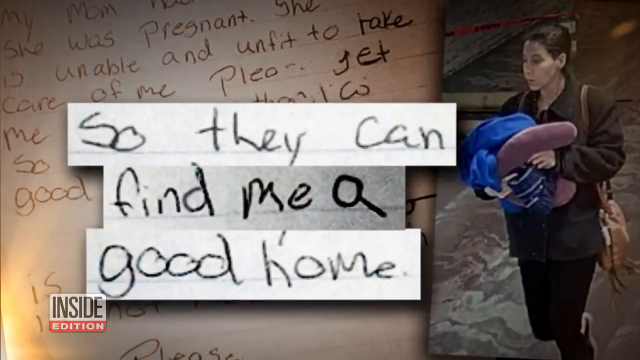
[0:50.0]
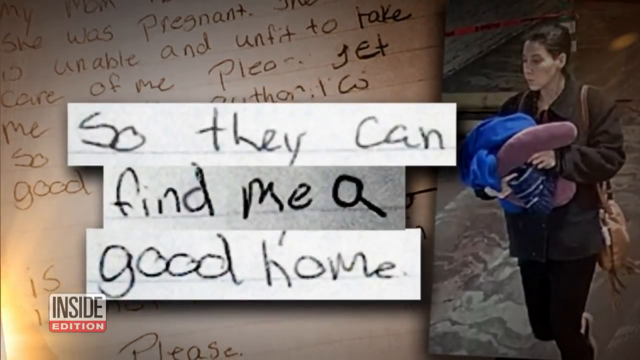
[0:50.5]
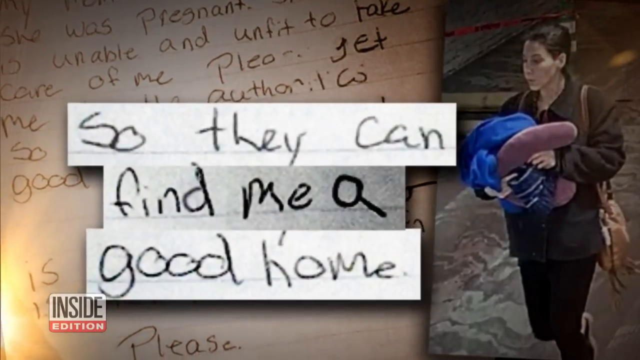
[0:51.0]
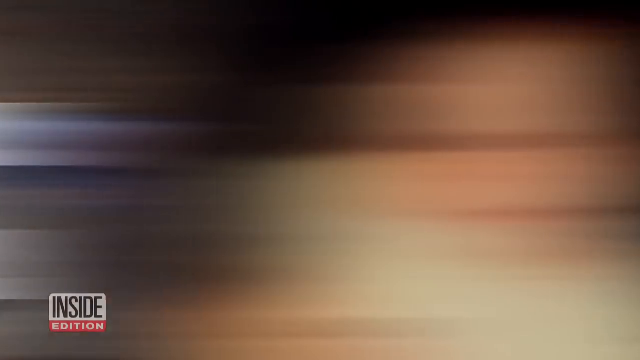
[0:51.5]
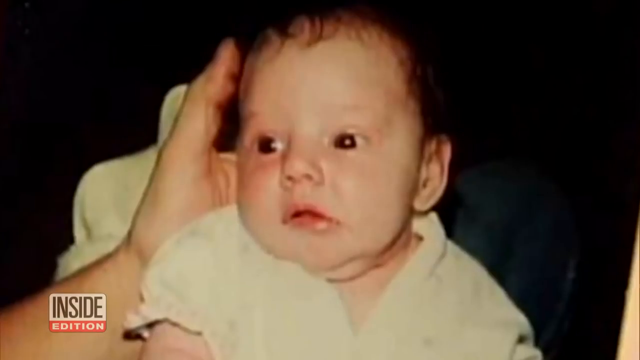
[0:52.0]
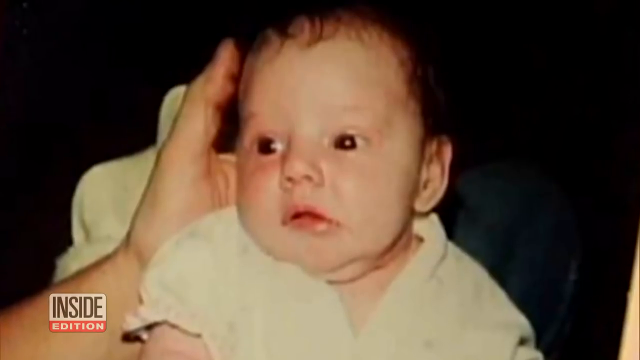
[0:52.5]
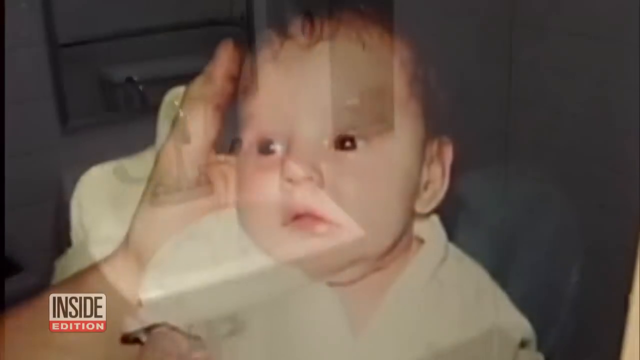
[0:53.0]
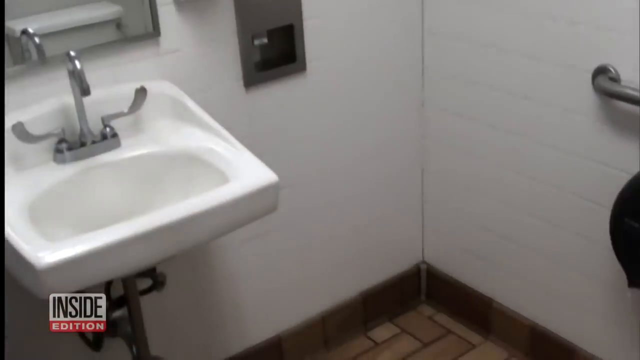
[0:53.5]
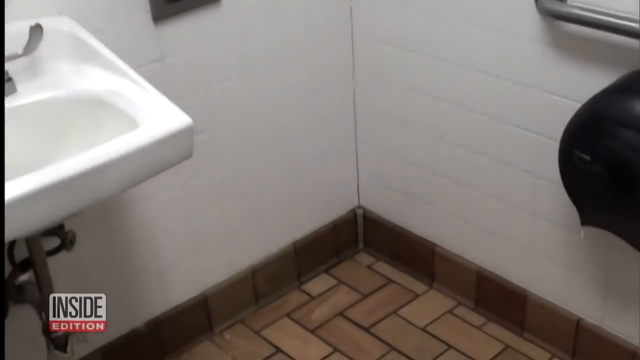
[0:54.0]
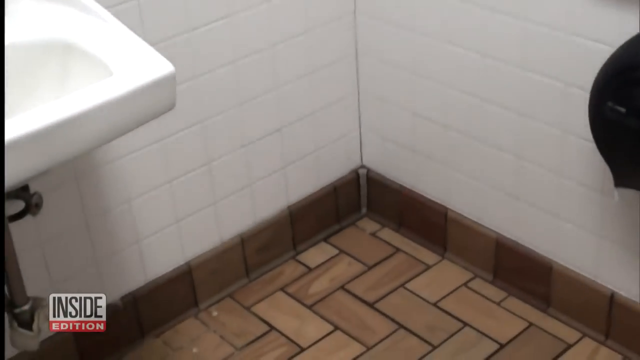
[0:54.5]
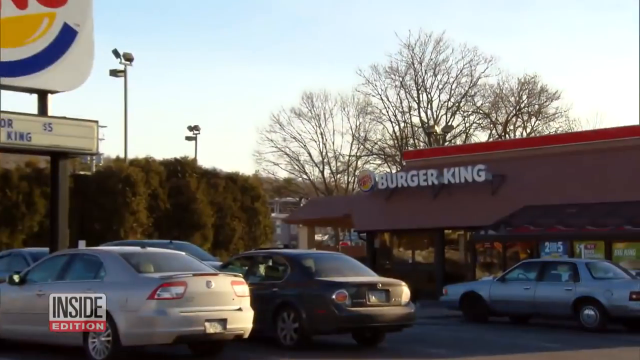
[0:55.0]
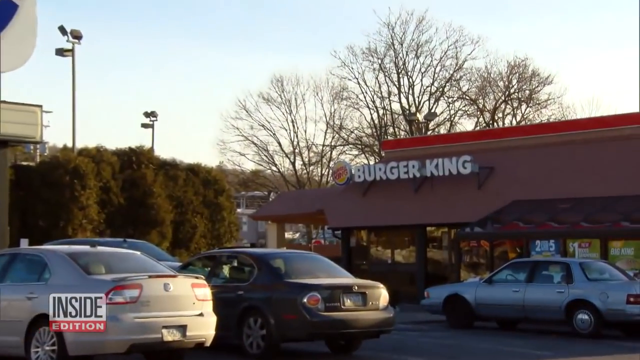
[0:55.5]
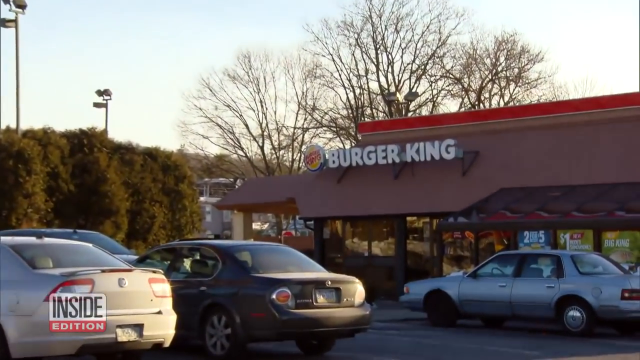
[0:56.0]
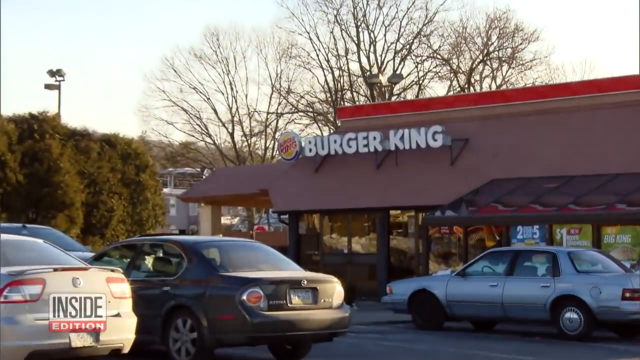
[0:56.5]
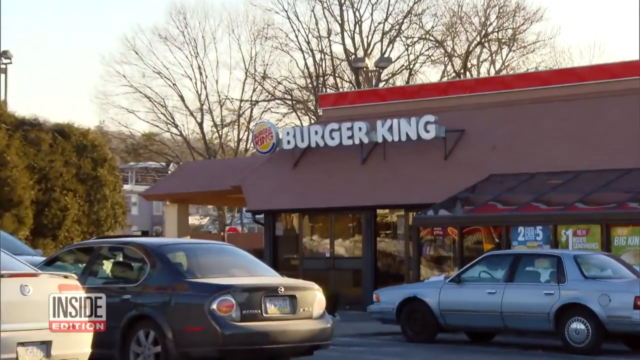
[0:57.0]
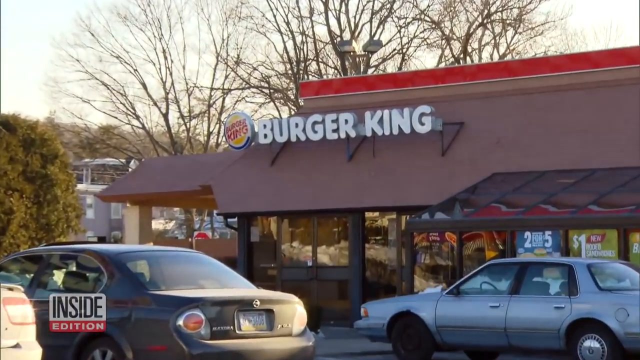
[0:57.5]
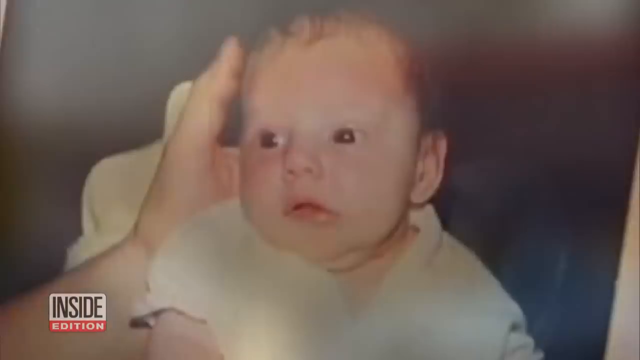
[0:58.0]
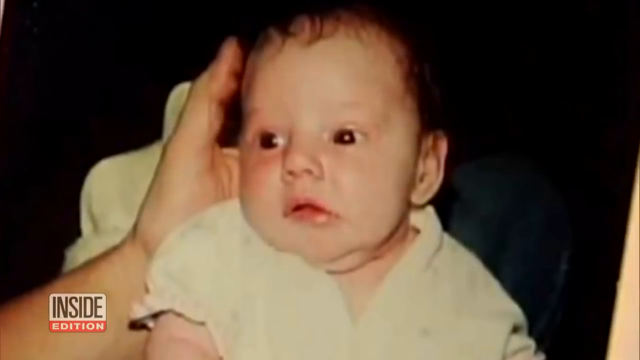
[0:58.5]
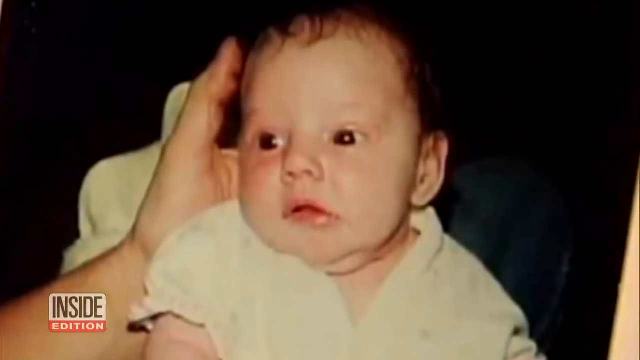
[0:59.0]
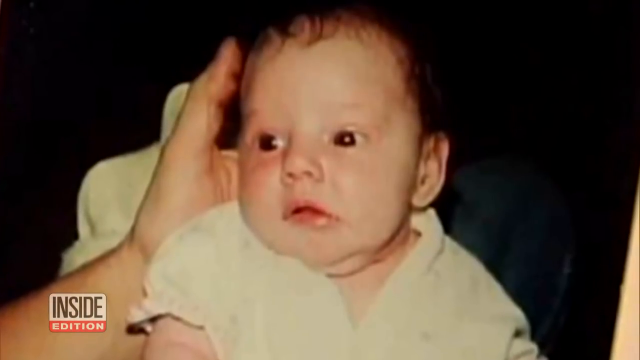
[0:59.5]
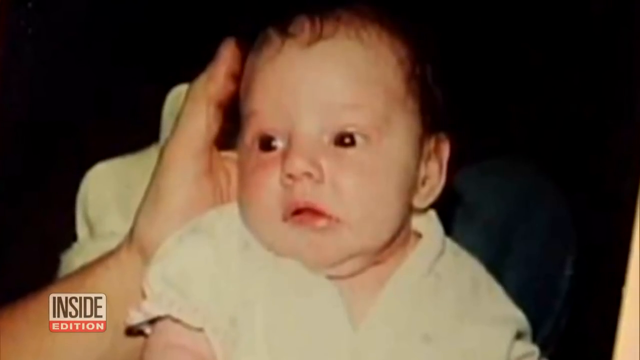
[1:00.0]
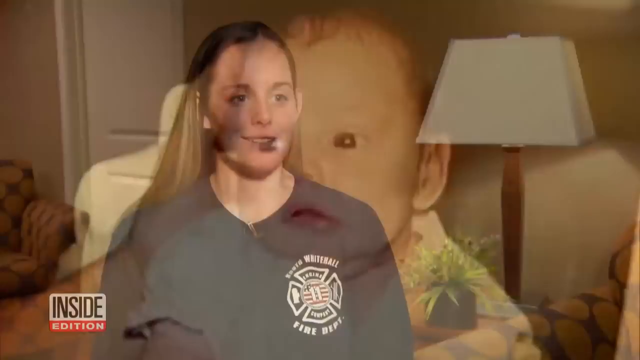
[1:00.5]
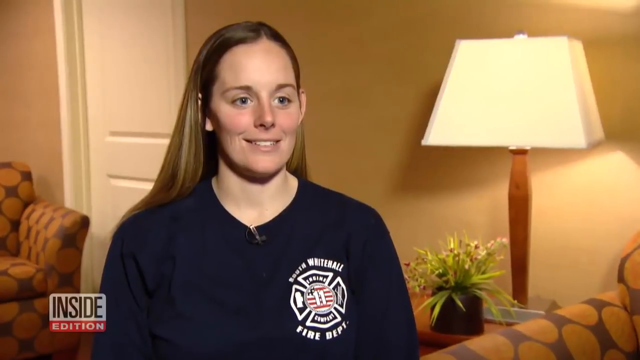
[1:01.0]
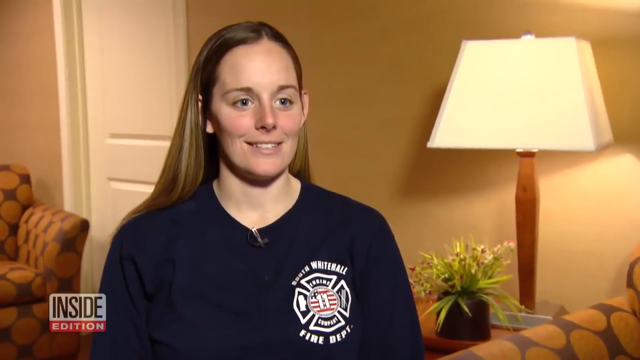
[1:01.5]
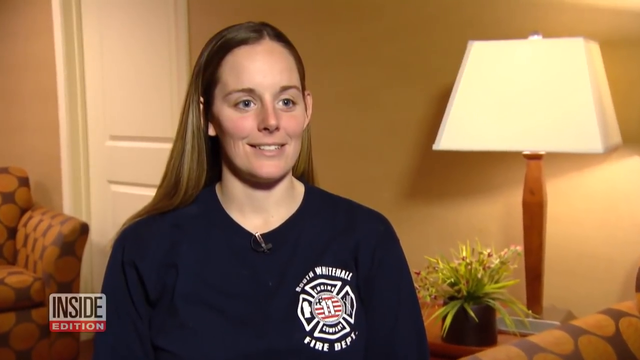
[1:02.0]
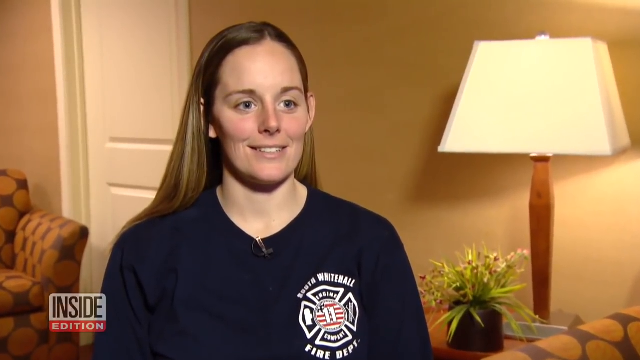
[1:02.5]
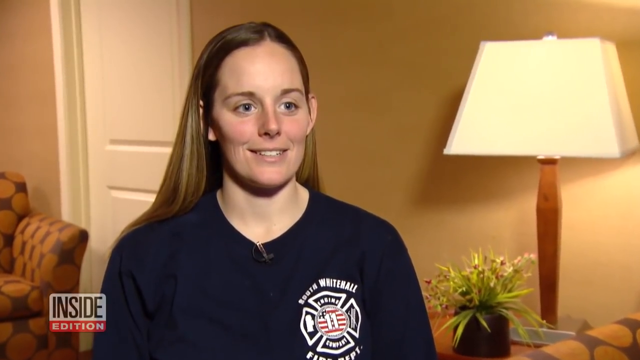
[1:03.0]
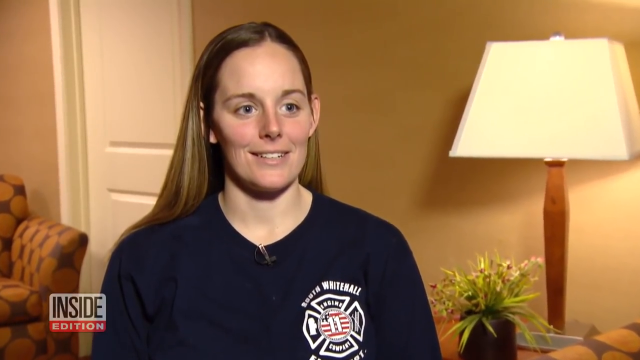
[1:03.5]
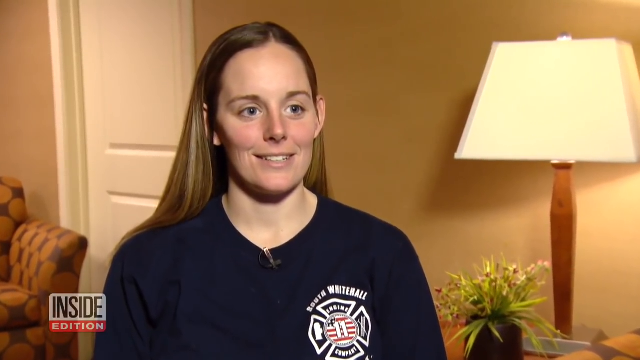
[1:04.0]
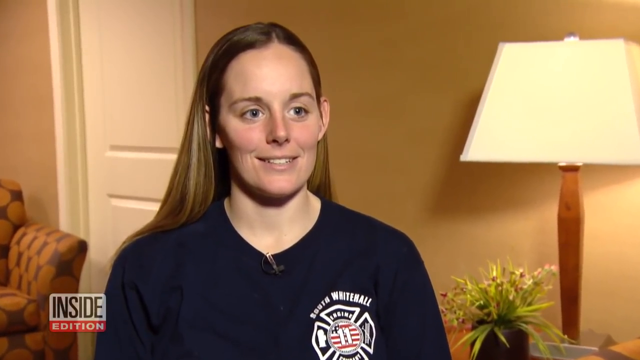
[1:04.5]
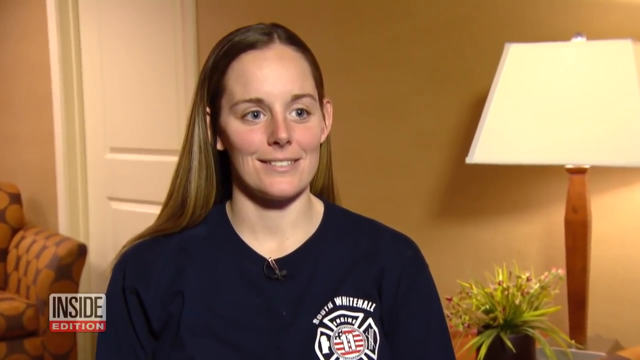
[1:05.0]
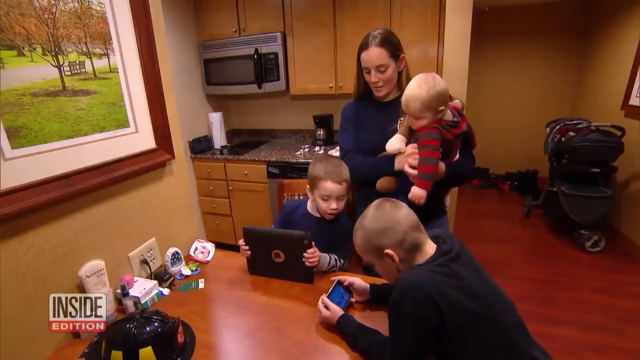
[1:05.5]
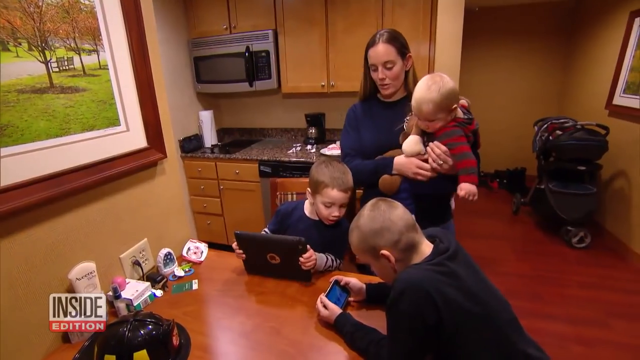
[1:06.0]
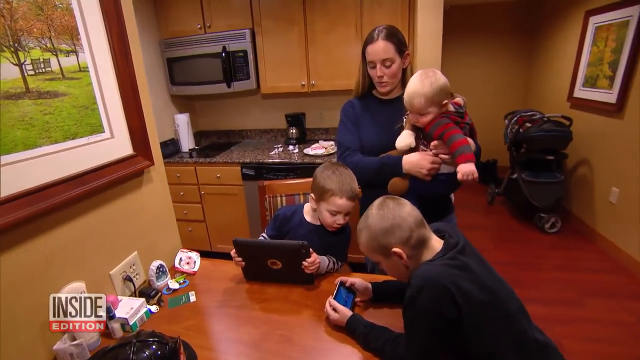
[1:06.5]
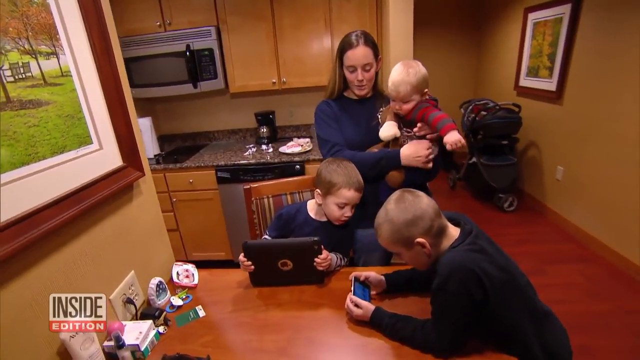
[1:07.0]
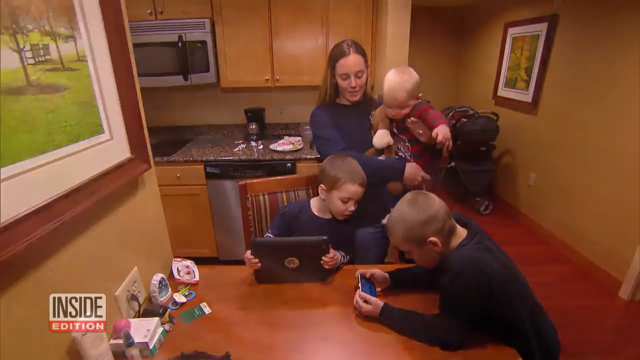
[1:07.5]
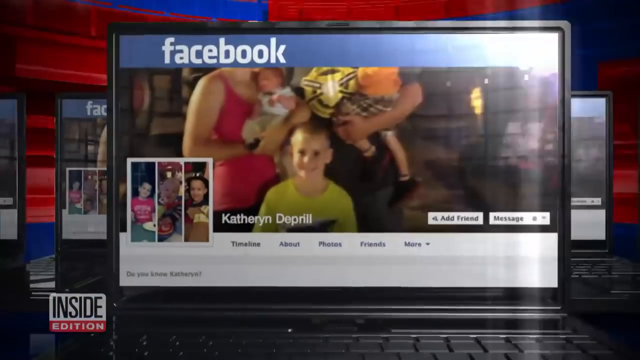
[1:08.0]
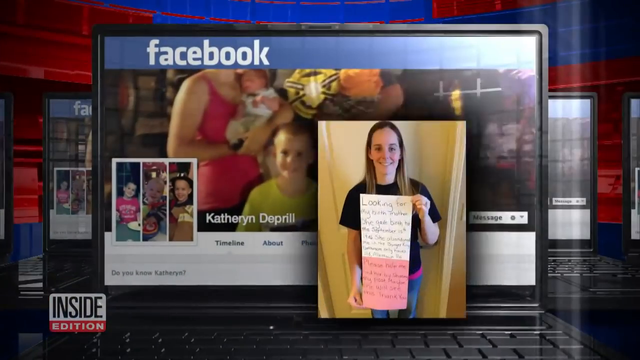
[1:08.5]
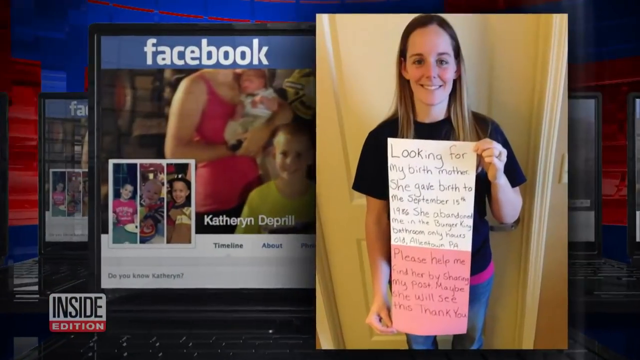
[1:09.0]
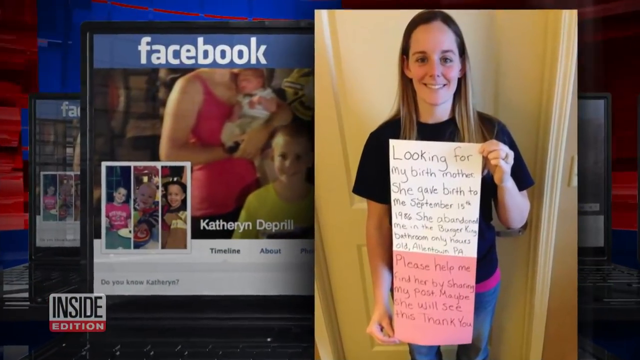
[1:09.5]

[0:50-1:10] Part of the handwritten note left with the baby is shown; it appears to be written from the baby's point of view. It reads "the mother is unable and unfit to take care of me. Please get me" and ends with "so they can find me a good home." The mother stands in an airport carrying what looks like a neck pillow, and possibly a bag or a jacket, maybe a jacket wrapped around a baby; it is hard to tell. The video then cuts to pictures of an older baby, apparently a different baby, at different times in her life, and then shows her as an adult woman looking for the birth mother who apparently left her in a Burger King bathroom. She holds a long handwritten note saying she is looking for her birth mother. The video cuts back to the woman walking through the airport, carrying either the baby or the note or both.